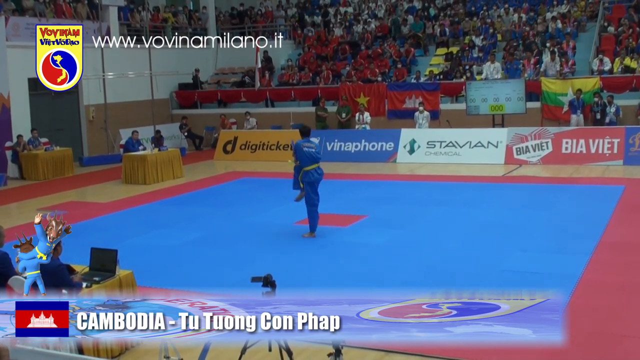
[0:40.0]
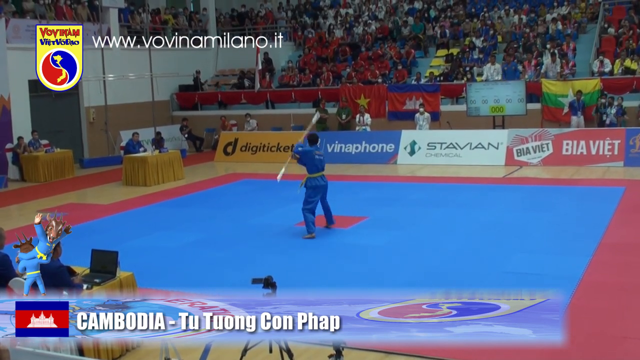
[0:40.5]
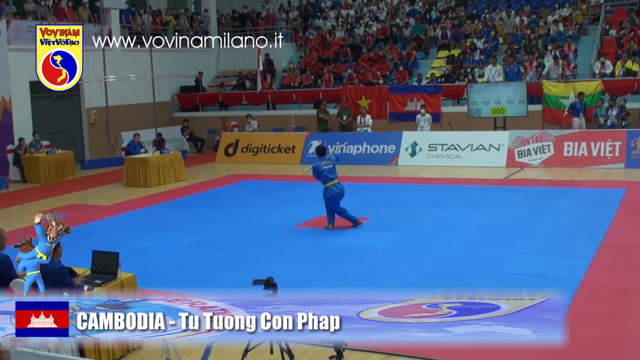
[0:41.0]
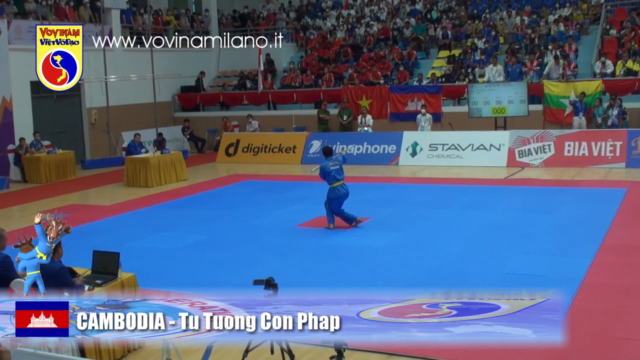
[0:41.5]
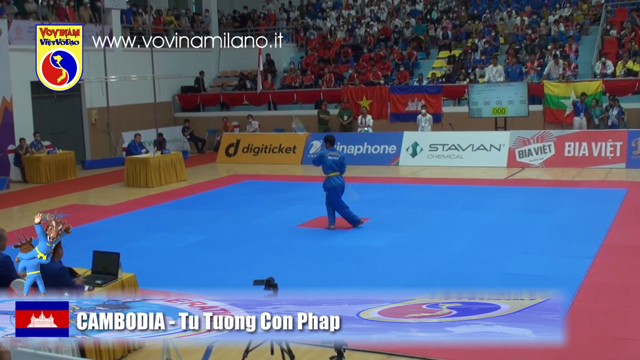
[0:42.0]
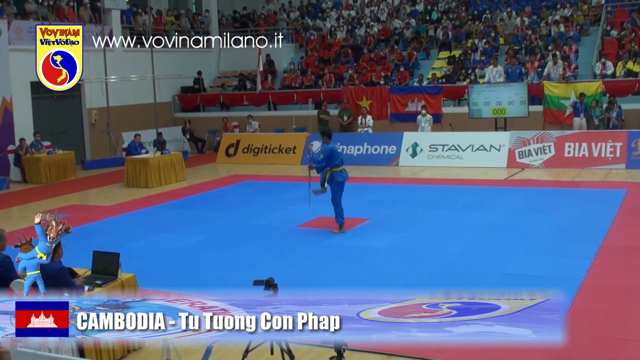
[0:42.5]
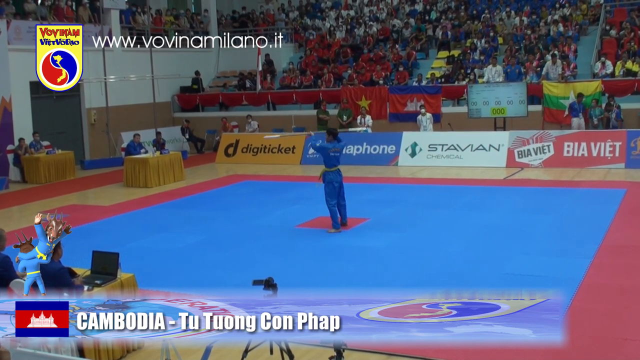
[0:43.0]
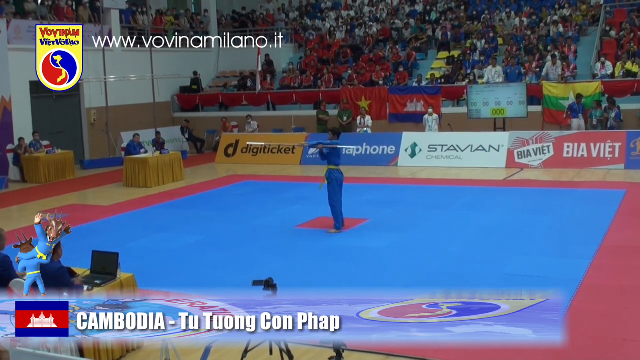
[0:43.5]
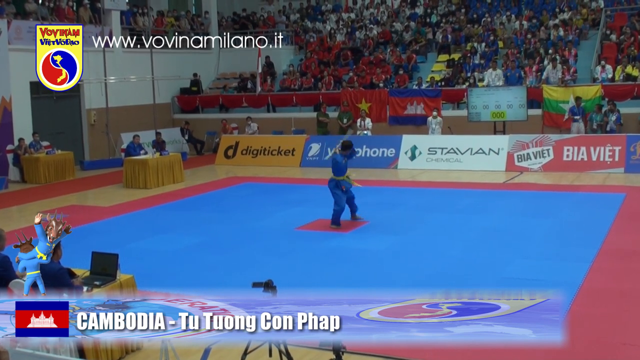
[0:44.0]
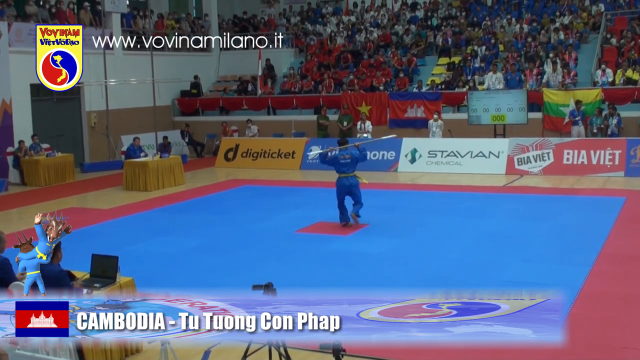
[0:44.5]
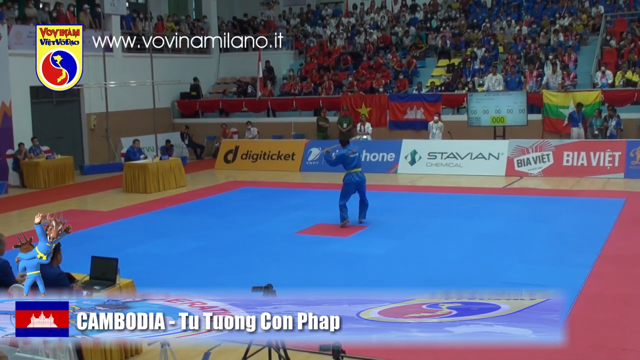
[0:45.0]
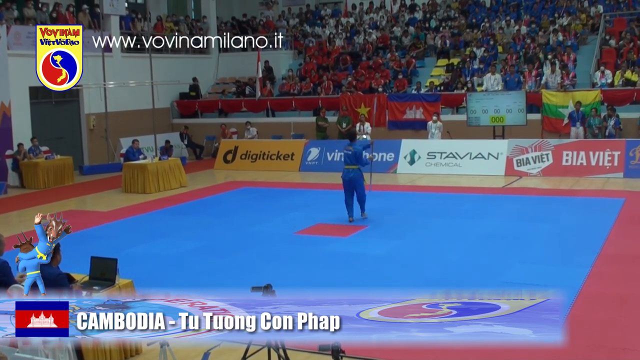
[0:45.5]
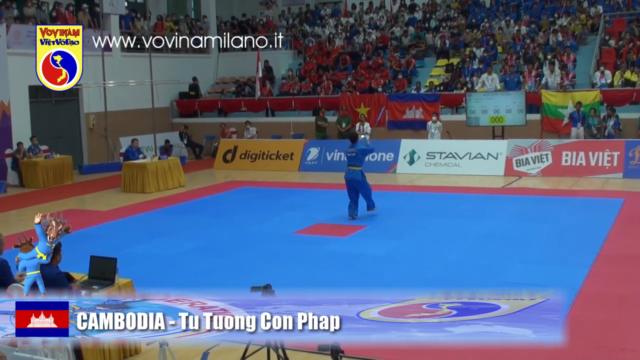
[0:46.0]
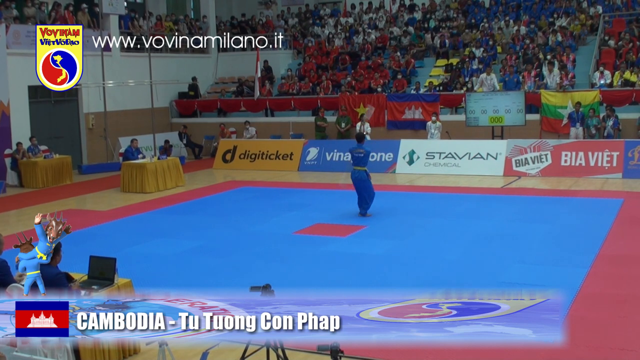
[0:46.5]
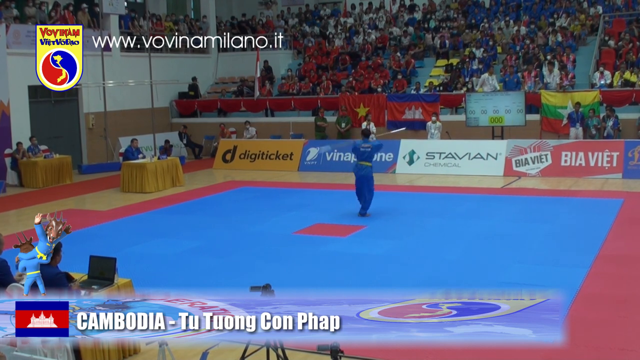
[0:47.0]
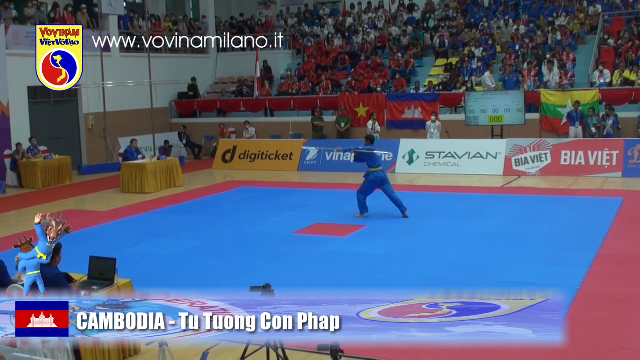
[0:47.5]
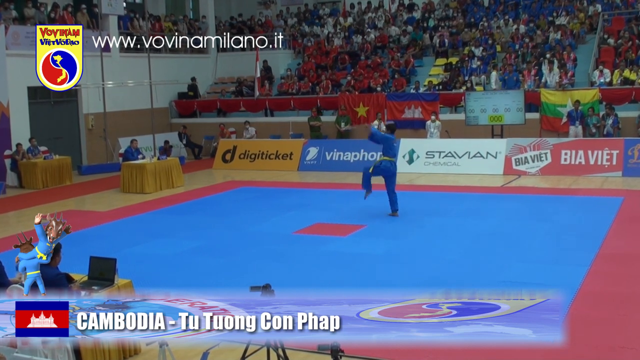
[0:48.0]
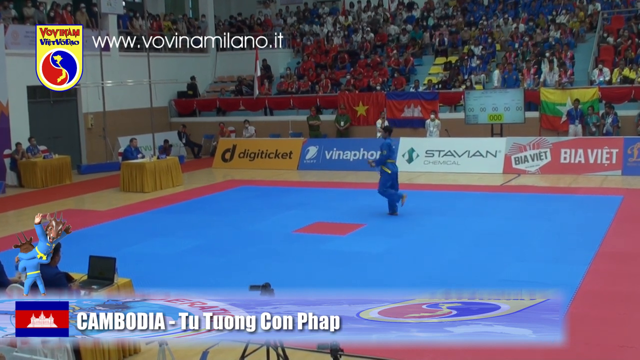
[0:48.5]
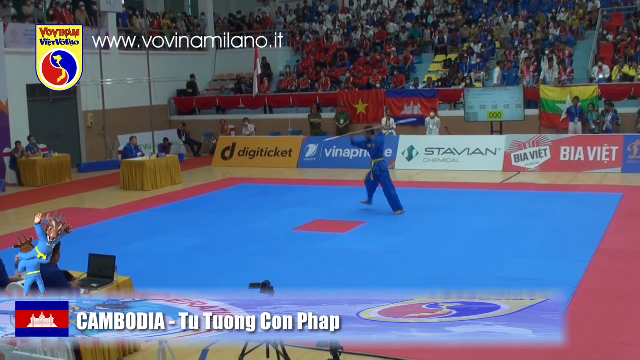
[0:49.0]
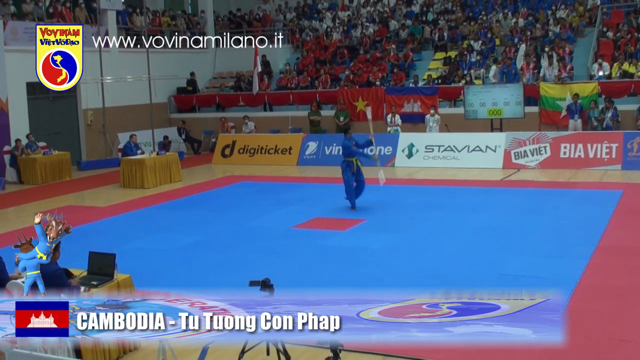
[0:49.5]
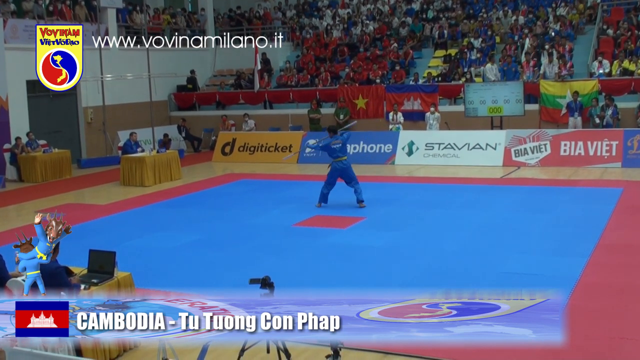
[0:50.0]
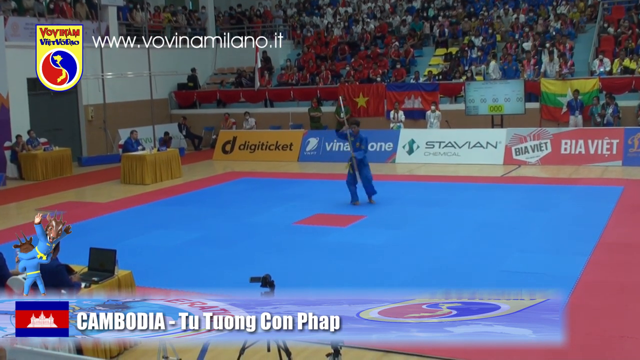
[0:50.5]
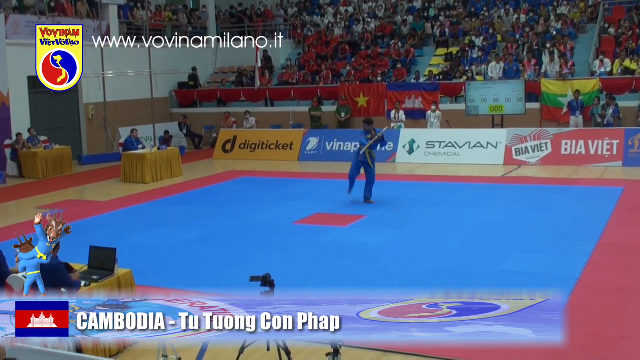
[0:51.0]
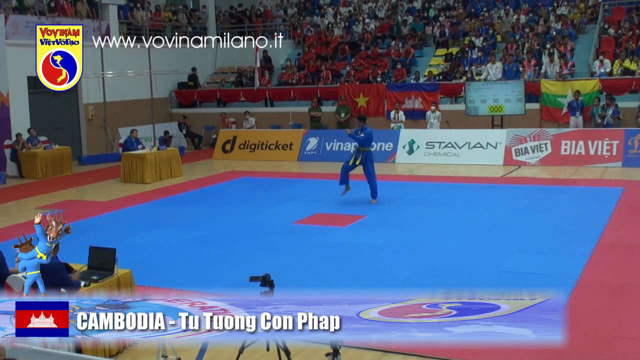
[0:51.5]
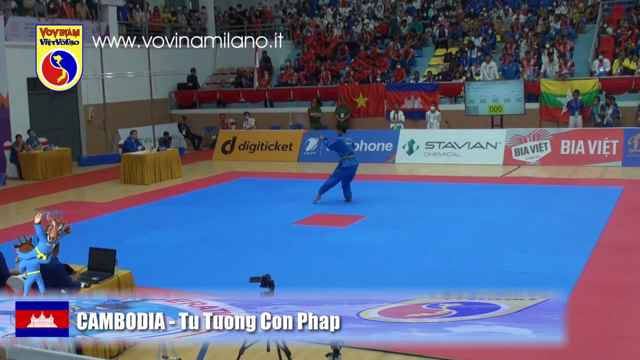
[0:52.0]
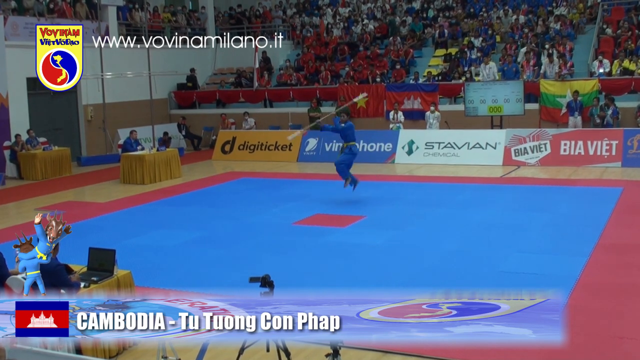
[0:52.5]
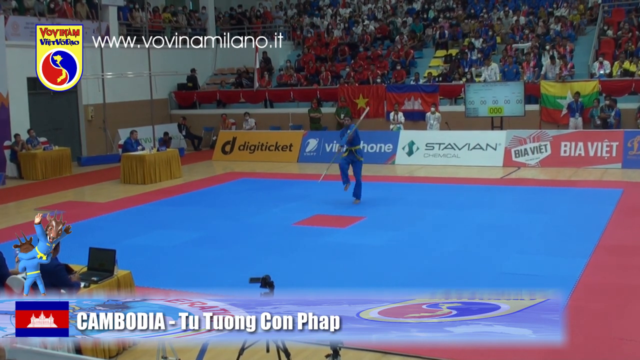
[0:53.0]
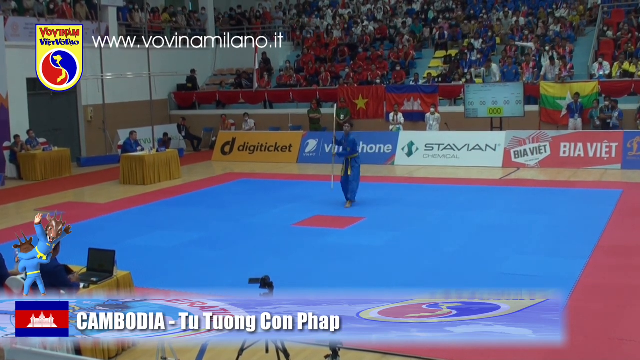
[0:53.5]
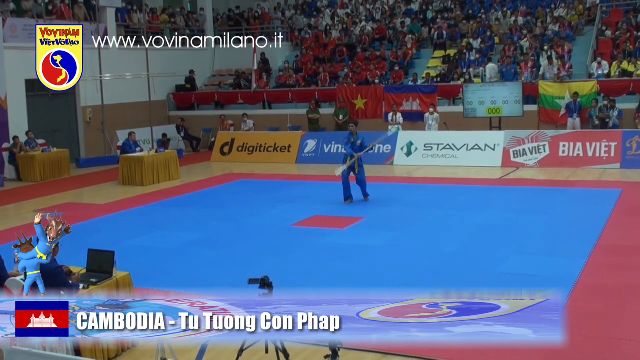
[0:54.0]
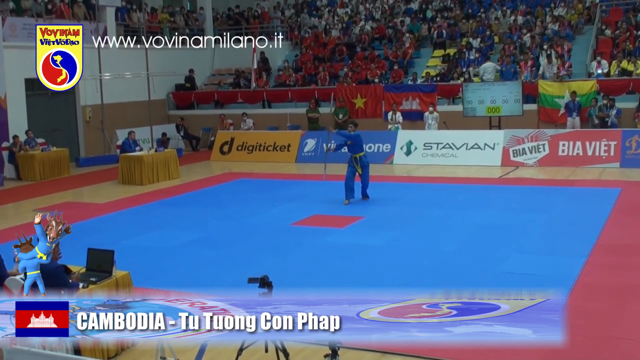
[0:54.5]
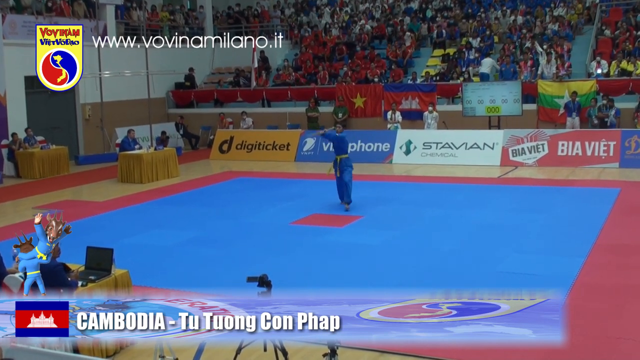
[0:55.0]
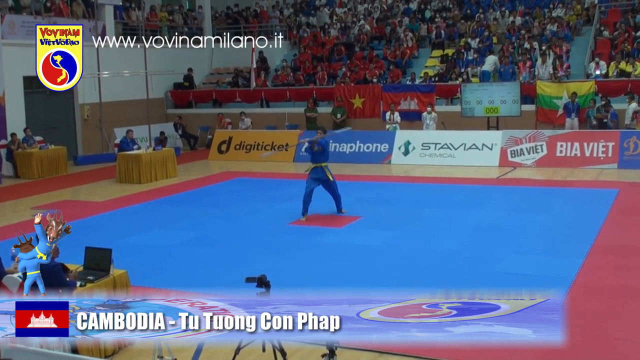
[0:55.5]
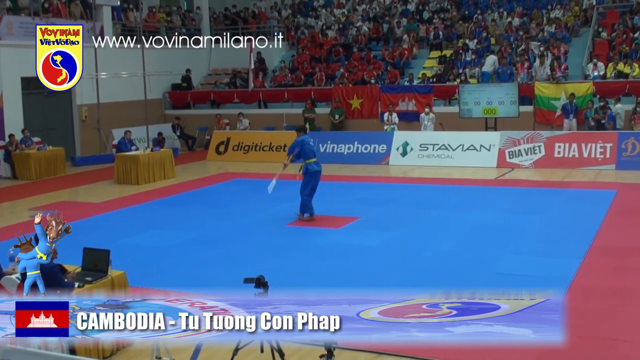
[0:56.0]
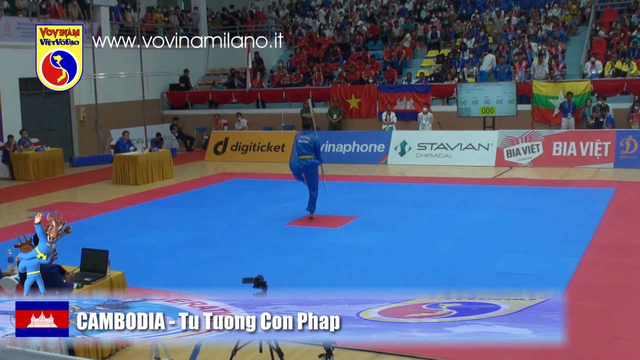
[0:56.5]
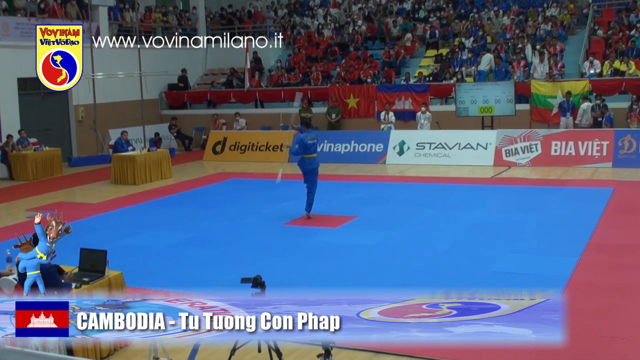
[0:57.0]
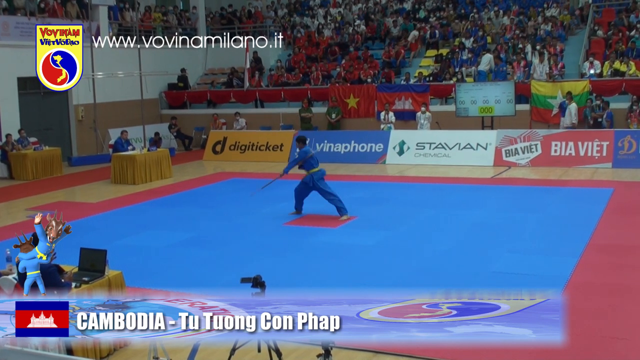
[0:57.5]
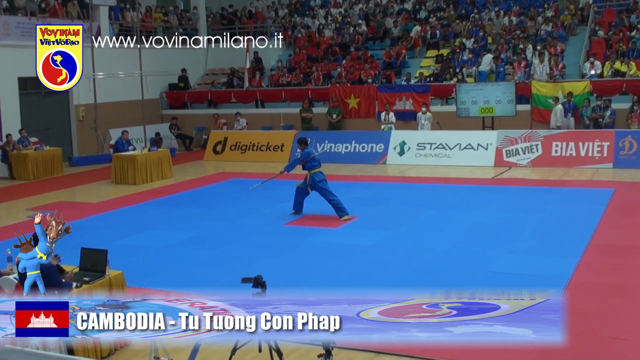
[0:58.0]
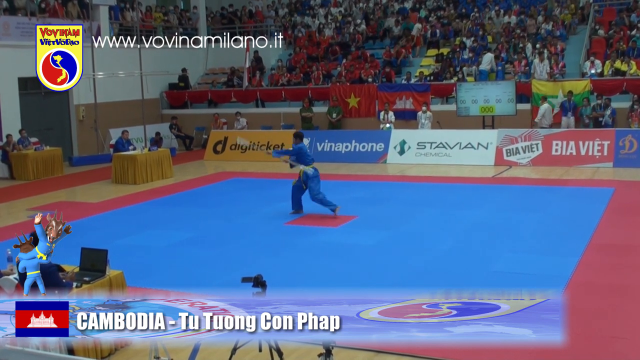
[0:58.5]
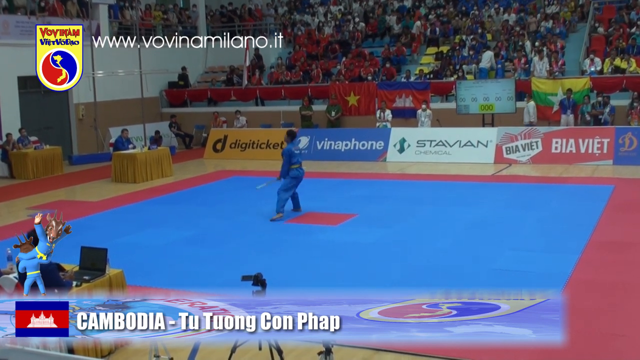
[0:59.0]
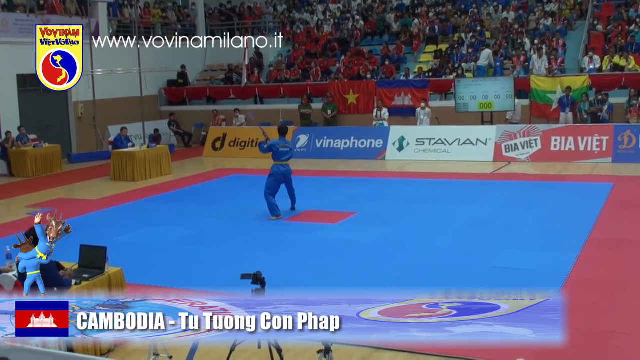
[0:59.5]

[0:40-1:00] In the sports arena, an audience is in the background, and colorful banners advertising companies are on the floor in front of them. The main floor is blue with orange around the outside and an orange square in the center. Two people sit at a table on the left that has a brown skirt, and two more people sit at a table further back against the wall. A man with black hair, wearing a blue shirt and pants with a yellow rope belt, is in the center of the arena on the orange square, holding a long sword or spear. He twirls the spear, performs fancy footwork and twirls with his hands, jumps in the air, and makes fast movements around the arena, turning in different directions as he performs for the audience.